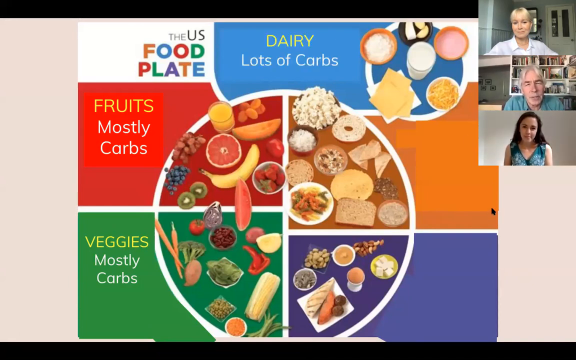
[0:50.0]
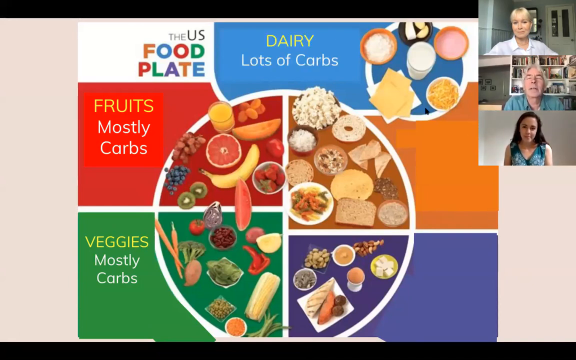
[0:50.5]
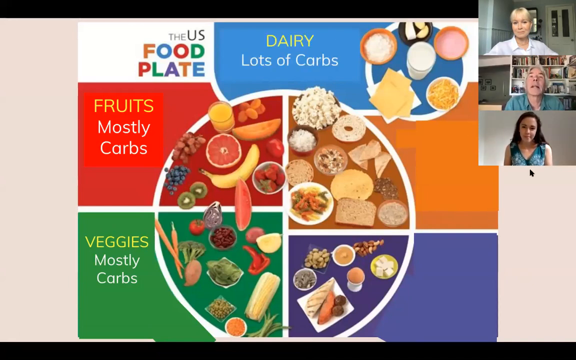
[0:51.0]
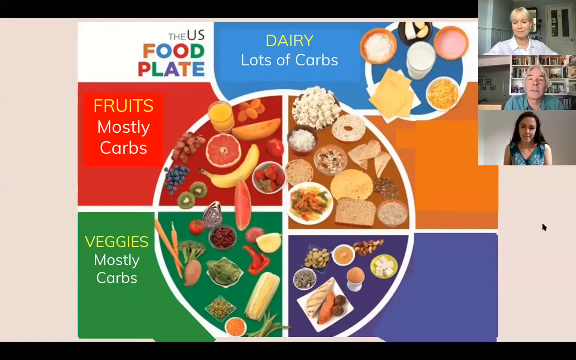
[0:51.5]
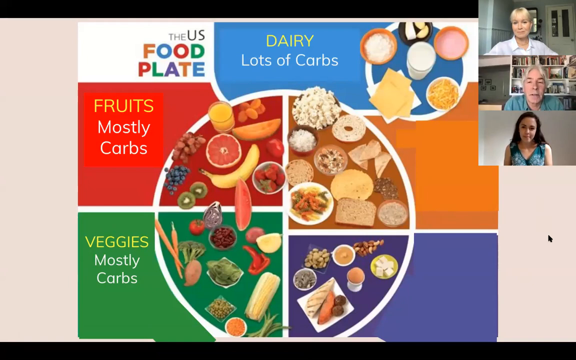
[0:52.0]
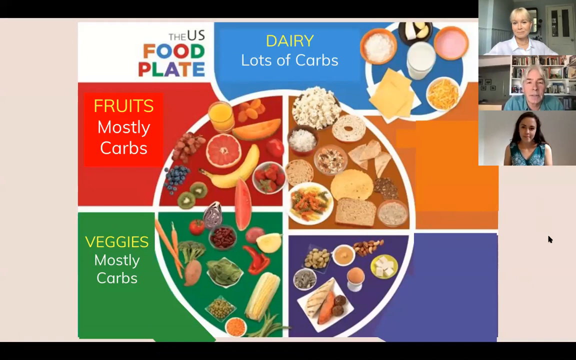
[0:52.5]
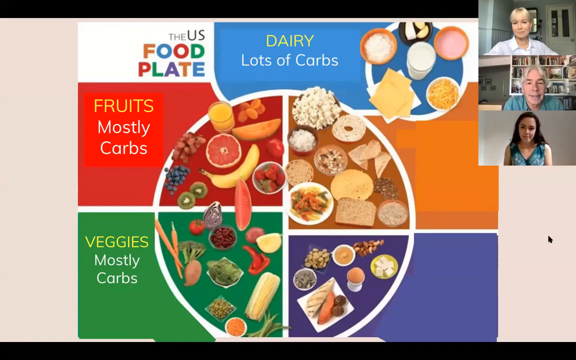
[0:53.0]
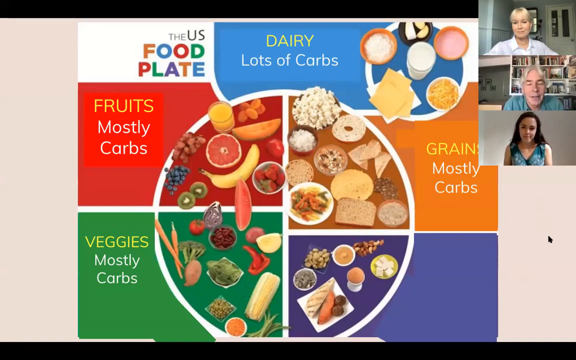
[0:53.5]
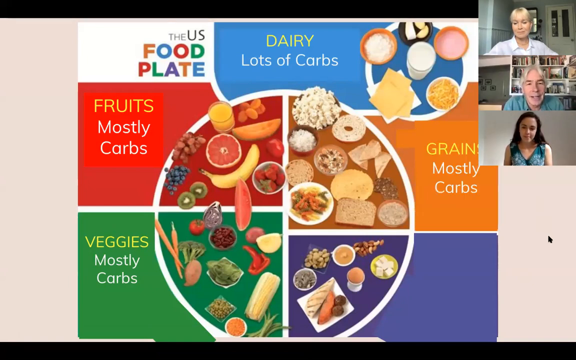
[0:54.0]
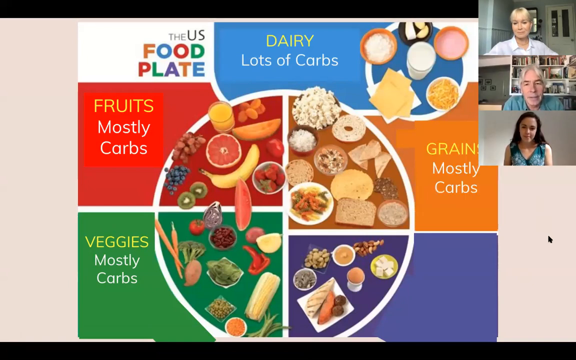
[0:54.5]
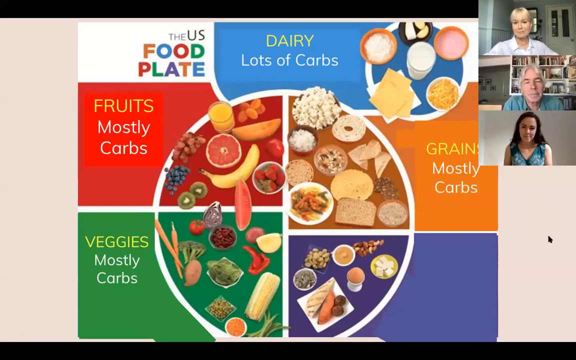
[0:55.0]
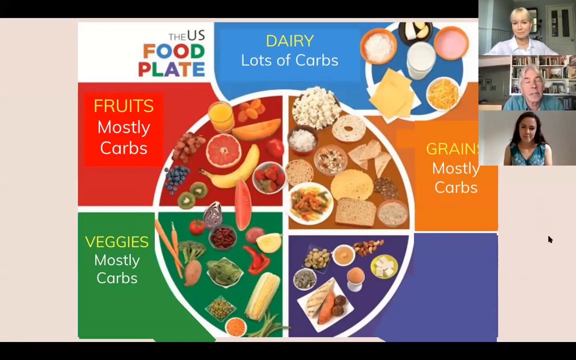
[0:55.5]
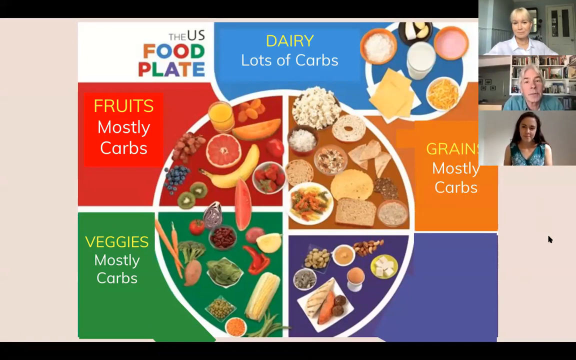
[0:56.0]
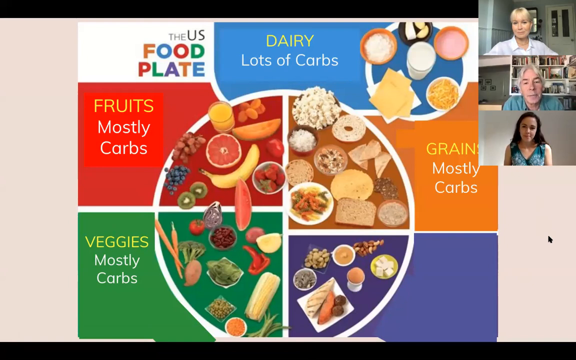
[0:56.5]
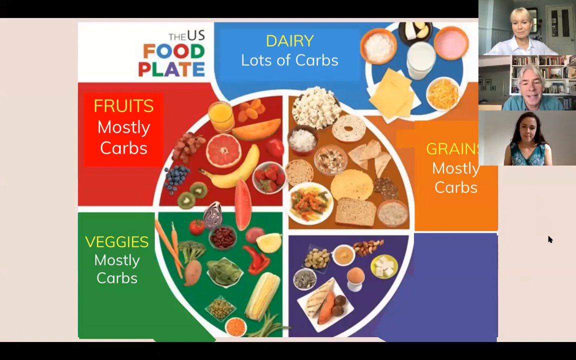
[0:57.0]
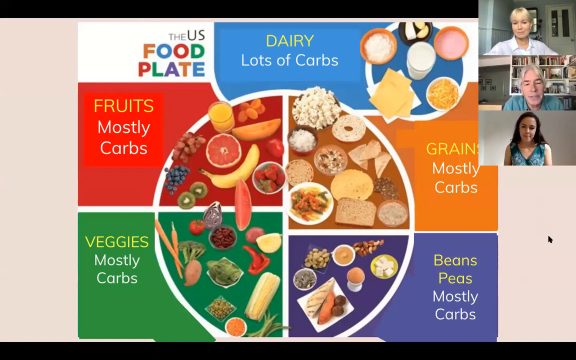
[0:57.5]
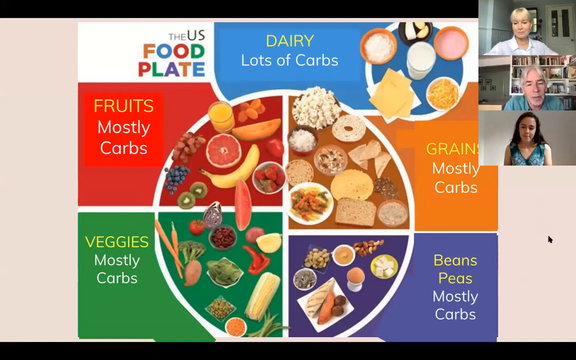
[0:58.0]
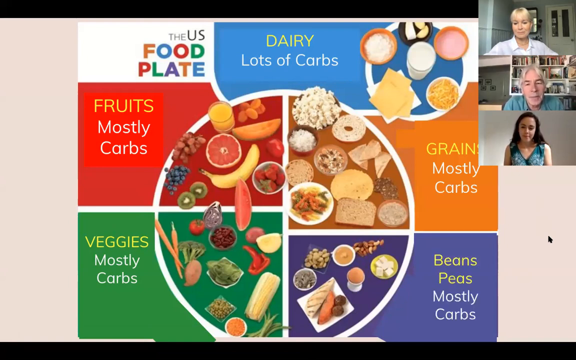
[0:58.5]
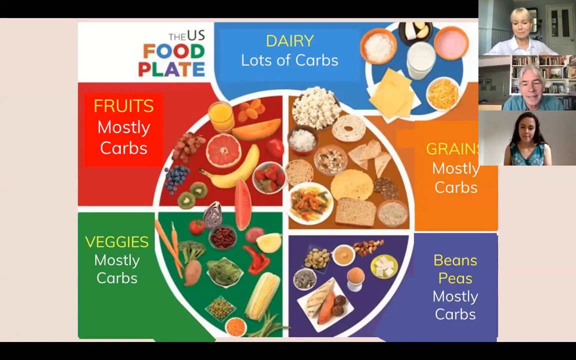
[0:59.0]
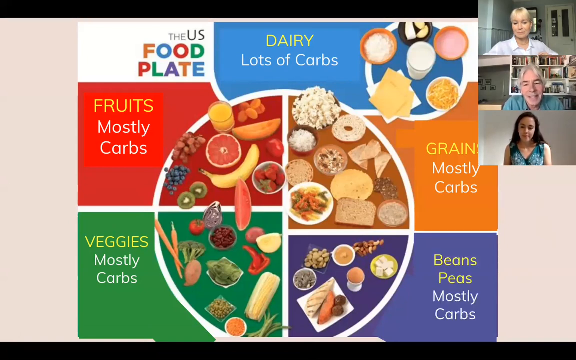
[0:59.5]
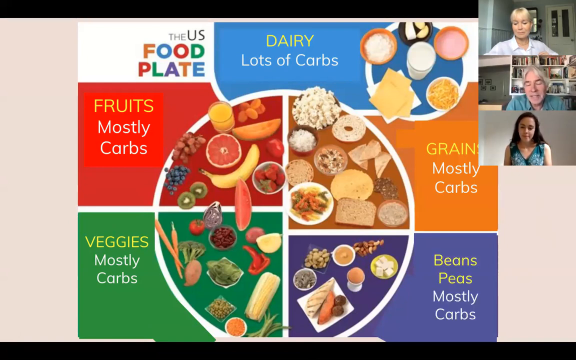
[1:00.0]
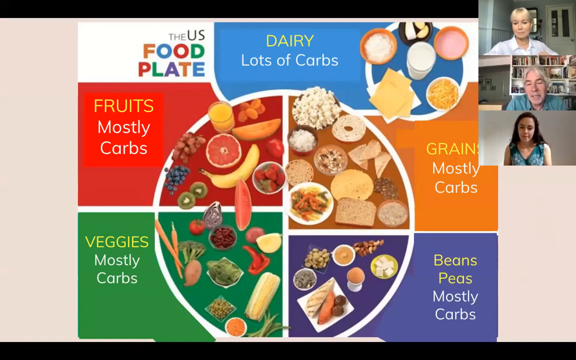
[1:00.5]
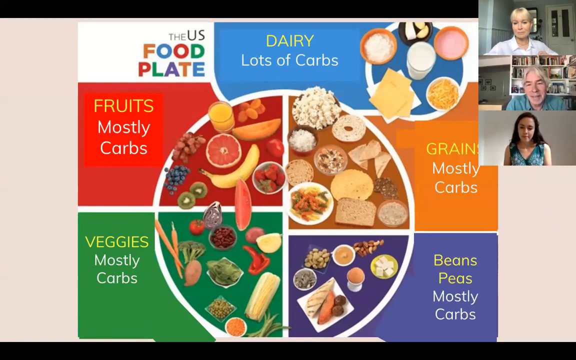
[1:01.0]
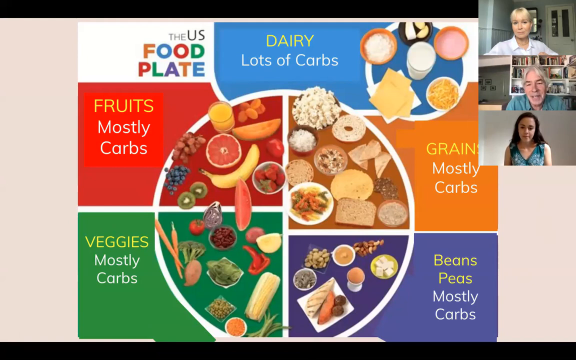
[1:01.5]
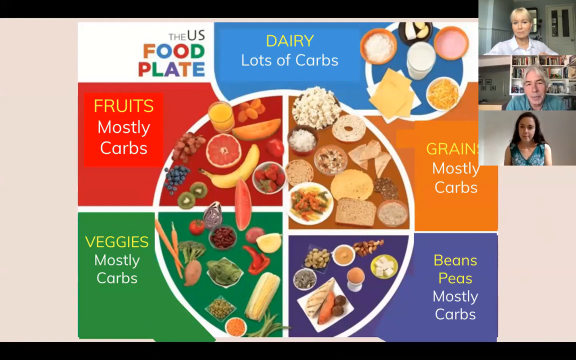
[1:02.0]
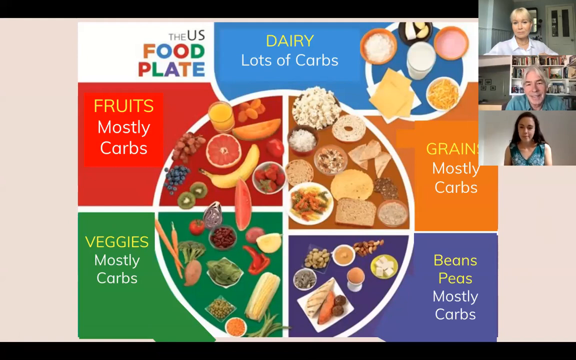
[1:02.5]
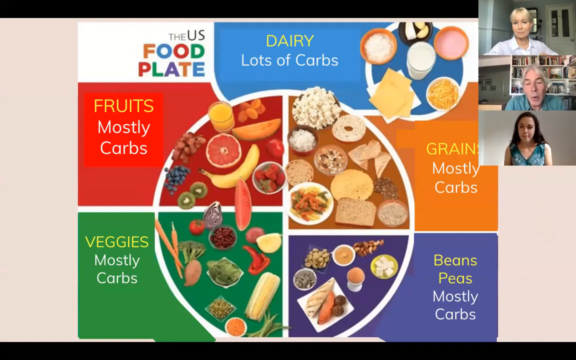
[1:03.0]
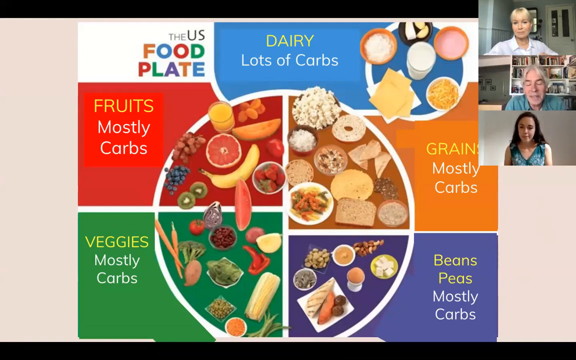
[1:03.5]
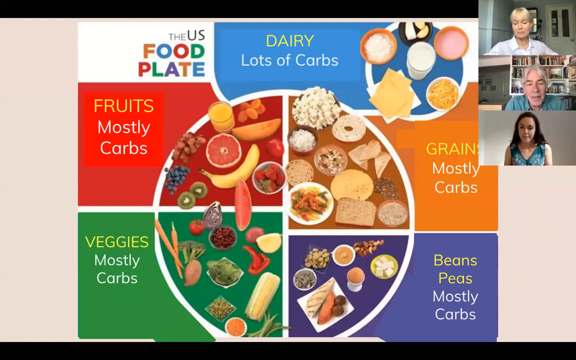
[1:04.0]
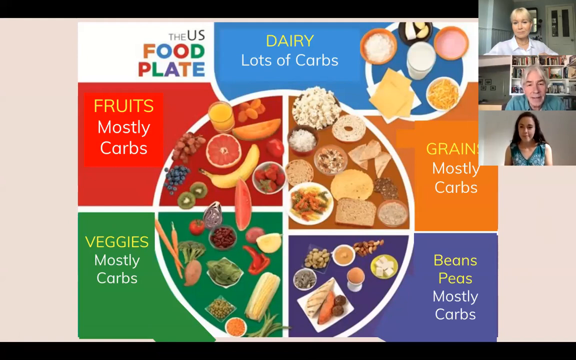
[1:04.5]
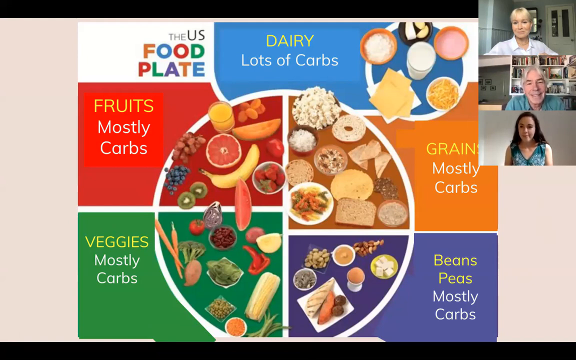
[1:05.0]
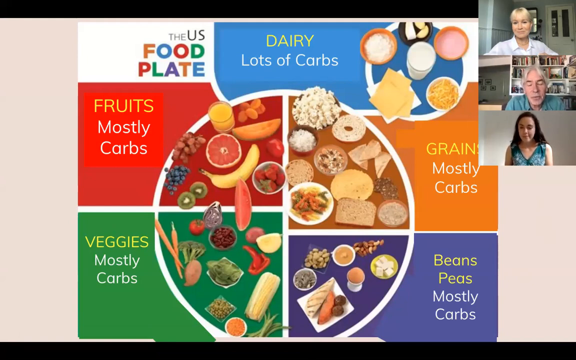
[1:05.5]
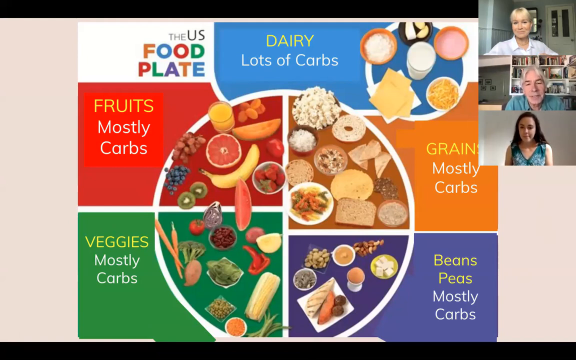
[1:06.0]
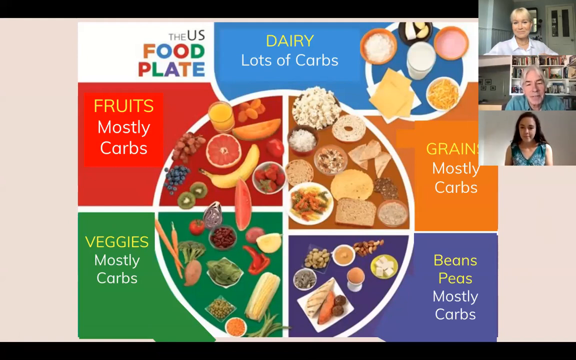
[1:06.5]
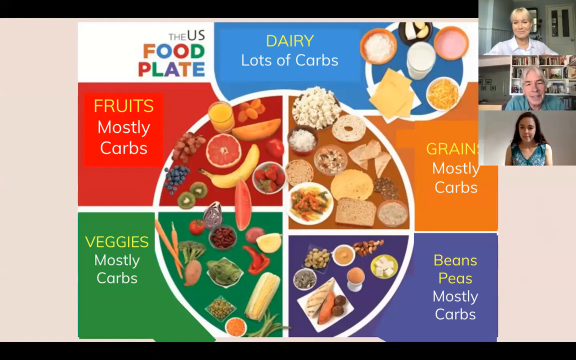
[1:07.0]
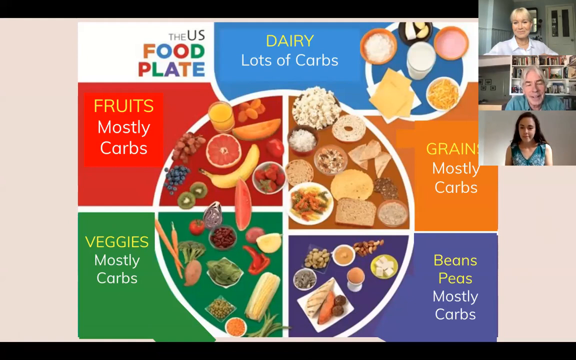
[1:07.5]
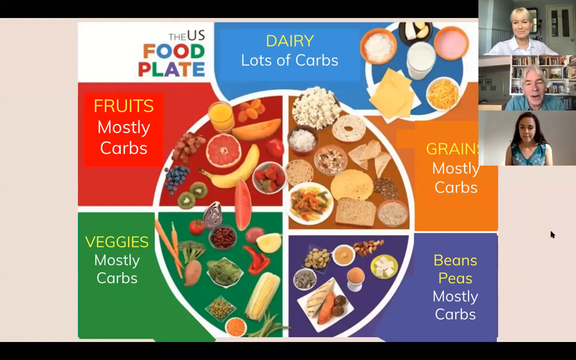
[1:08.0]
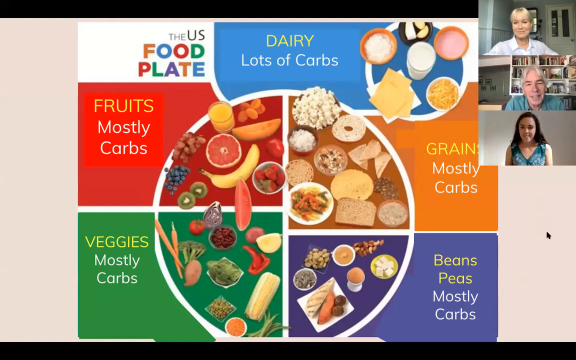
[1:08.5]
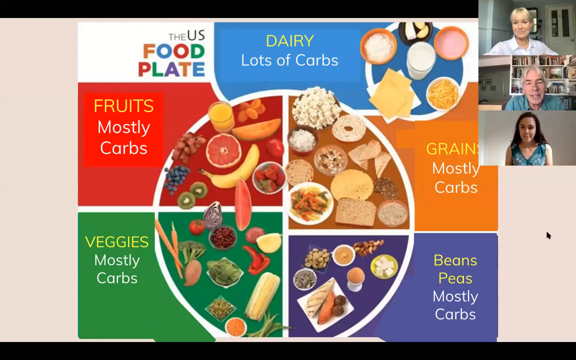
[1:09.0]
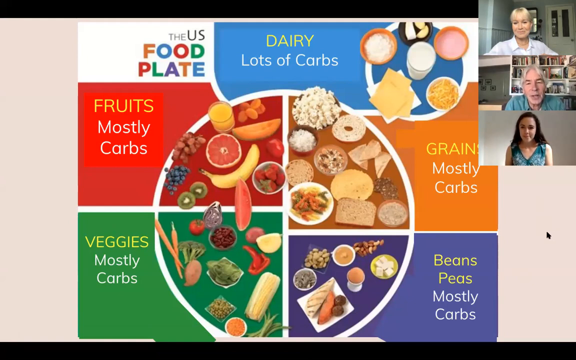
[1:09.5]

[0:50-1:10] A chart, graphic, or poster takes up the majority of the frame in the center of the screen. In the top left corner, multicolored, rainbow-type text reads "the U.S. Food Plate." To the right of that it says "dairy, lots of carbs," and to the right of those words is a white circle with different dairy foods such as milk and cheese. On the left of the screen, below the title, it says "fruits, mostly carbs." A red segment of a white circle contains pictures of fruits such as grapes, strawberries, banana, grapefruit, orange, and others. Right below that is a green segment taking up around a quarter of the circle, with "veggies, mostly carbs" in green text to its left; it shows corn, carrots, tomatoes, and other apparent veggies. To the right of that is a purple segment showing nuts and meat, apparently protein foods. Above that segment is an orange or brown segment showing grains such as bread, a tortilla shell that looks like it is made of corn, a bagel, and popcorn.